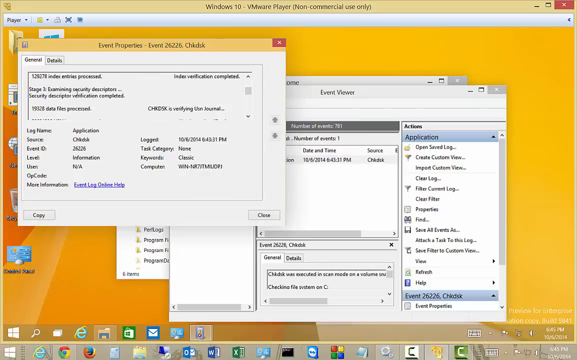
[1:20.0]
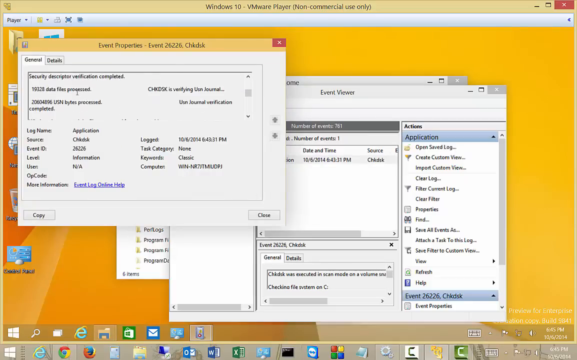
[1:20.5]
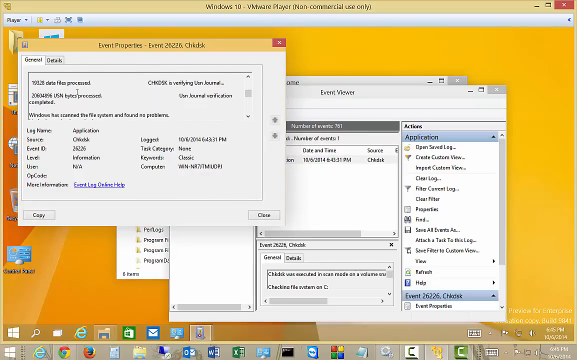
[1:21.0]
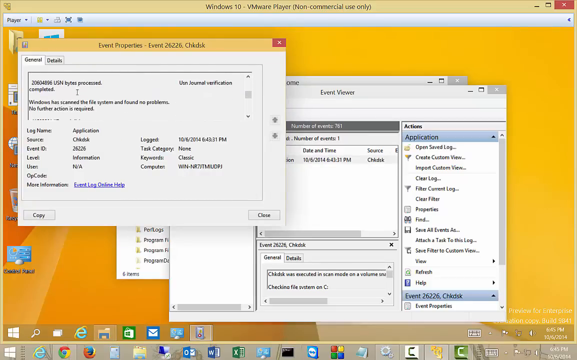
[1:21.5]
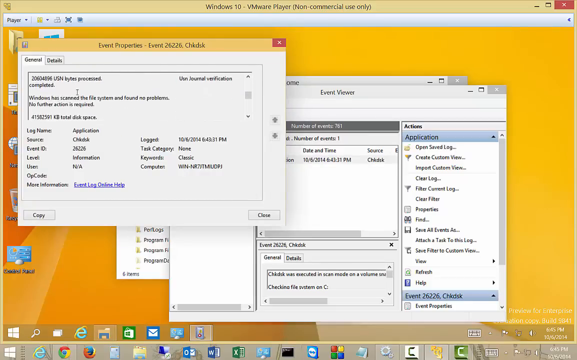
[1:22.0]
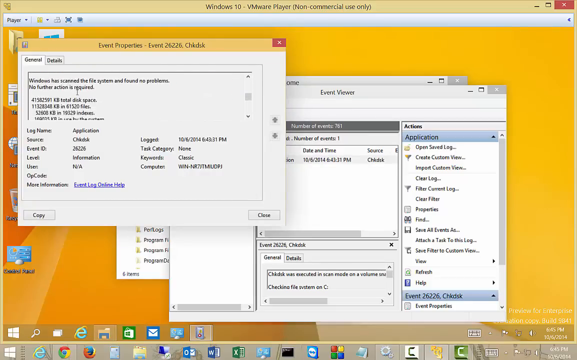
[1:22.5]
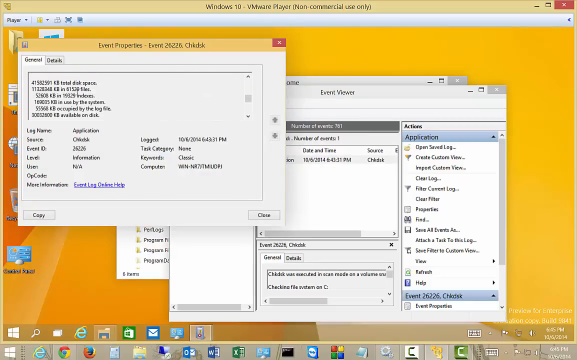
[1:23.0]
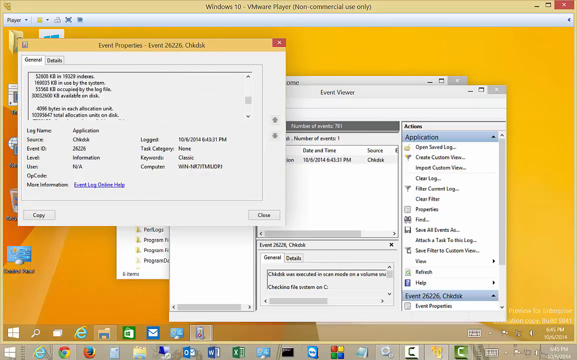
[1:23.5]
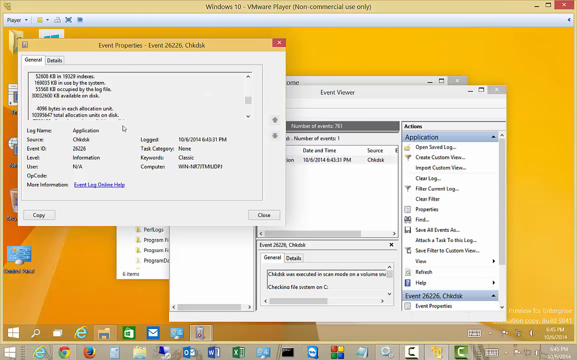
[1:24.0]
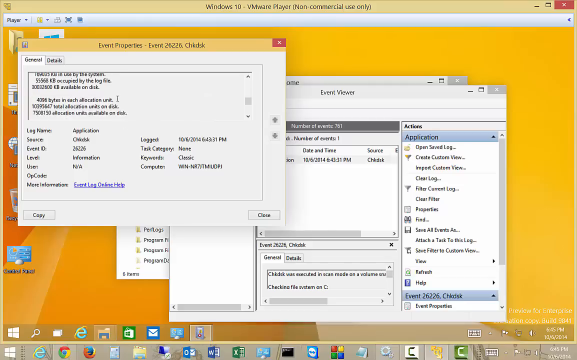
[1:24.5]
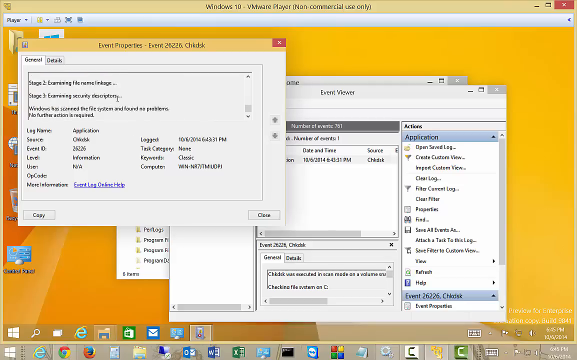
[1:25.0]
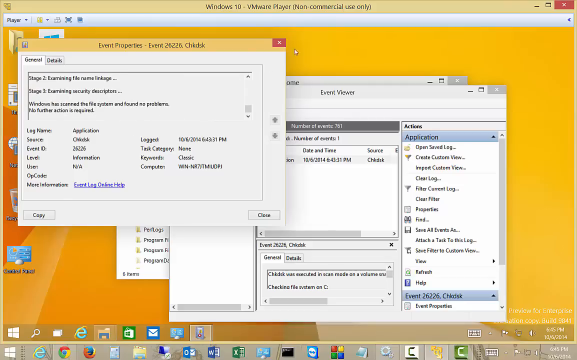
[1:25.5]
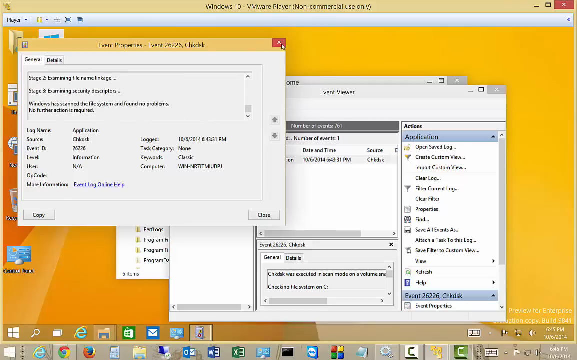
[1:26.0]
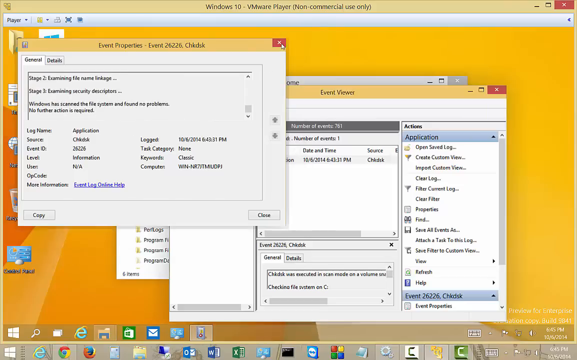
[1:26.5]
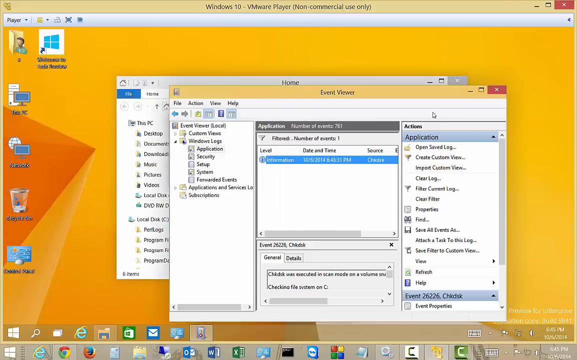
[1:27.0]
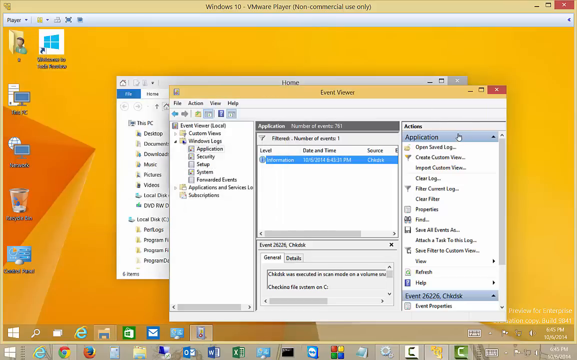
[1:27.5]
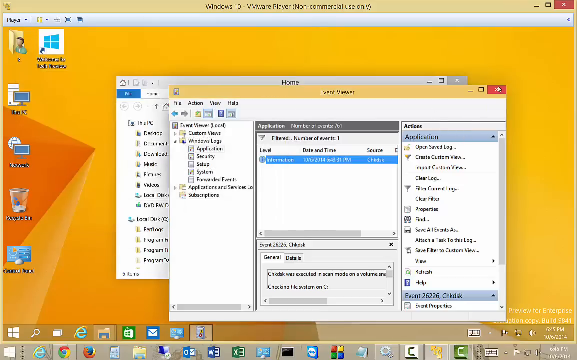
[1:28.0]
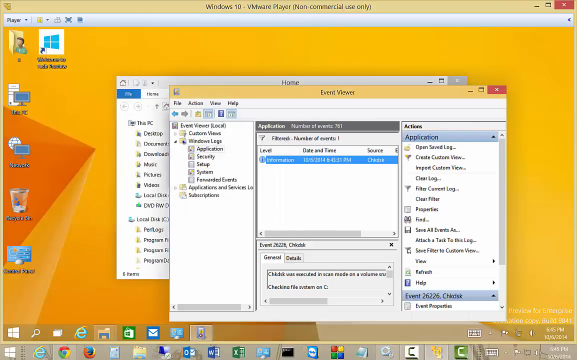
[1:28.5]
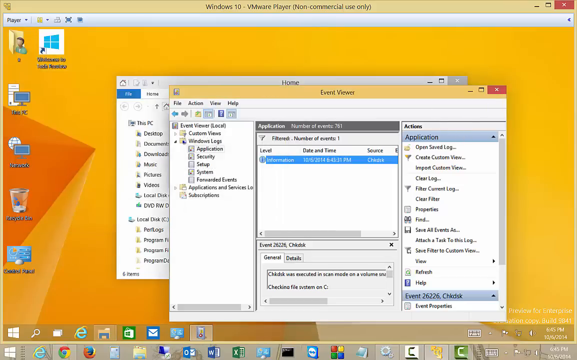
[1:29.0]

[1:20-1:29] The yellow Windows 10 background has a little bit of orange to the left. Three windows are open, one on top of the other. The foremost window says "event properties - event" and has two tabs, one that says "general" and the other "details." Under General is text that is scrolled all the way down. The window is closed using the X button on top, then the same event properties window opens again and the text is scrolled all the way down again. This opening and scrolling down through the event properties text repeats a couple of times.